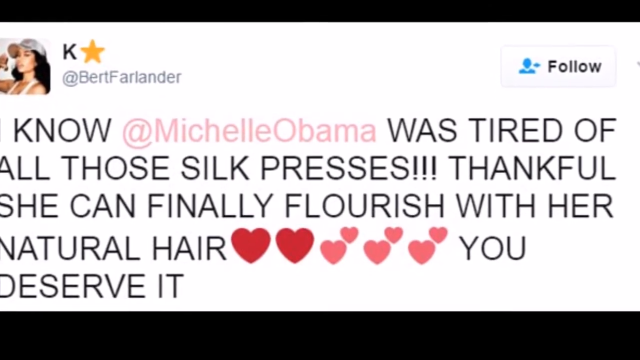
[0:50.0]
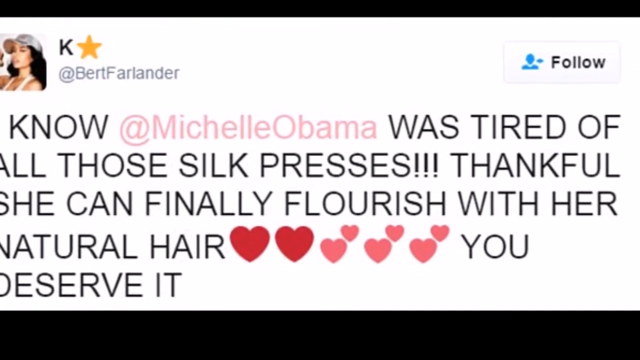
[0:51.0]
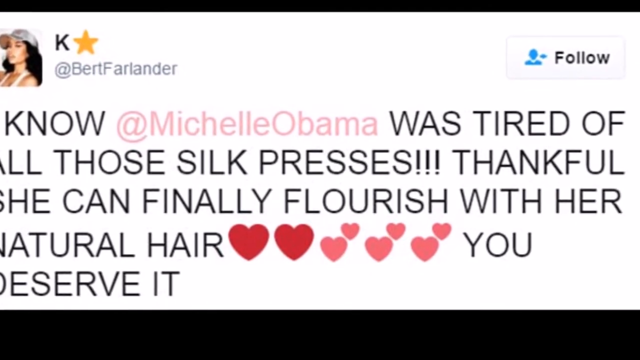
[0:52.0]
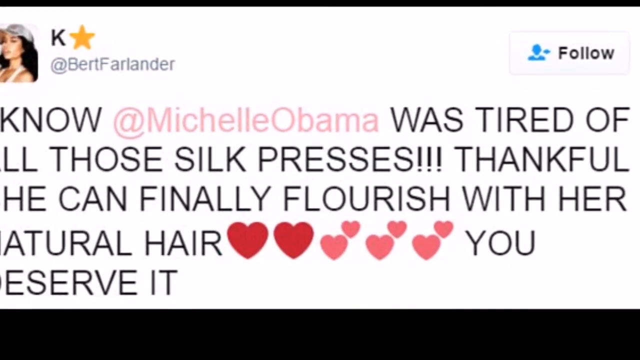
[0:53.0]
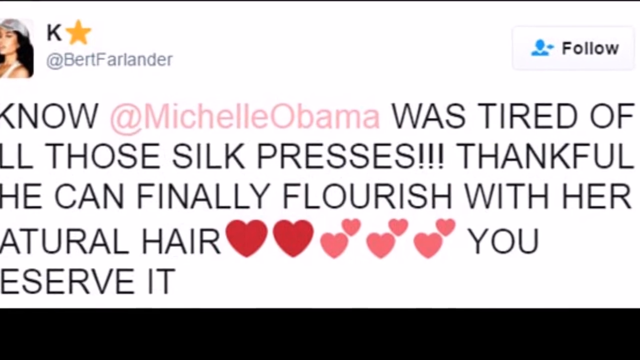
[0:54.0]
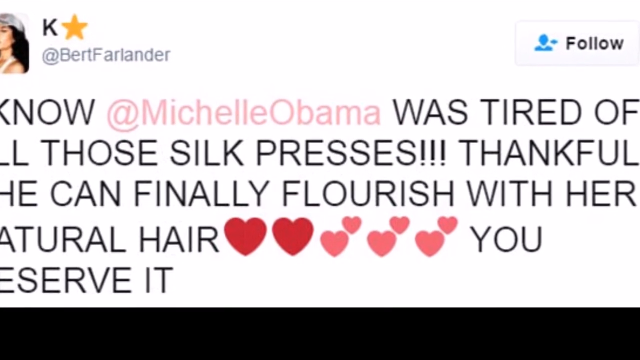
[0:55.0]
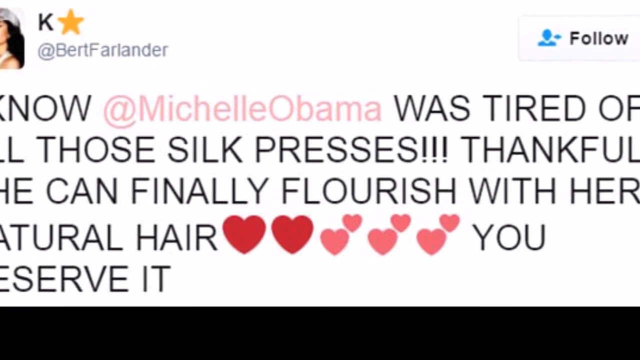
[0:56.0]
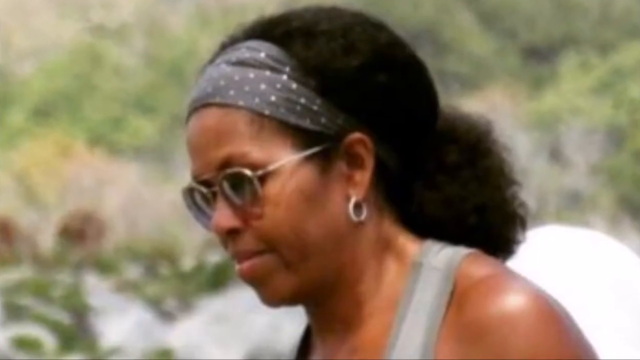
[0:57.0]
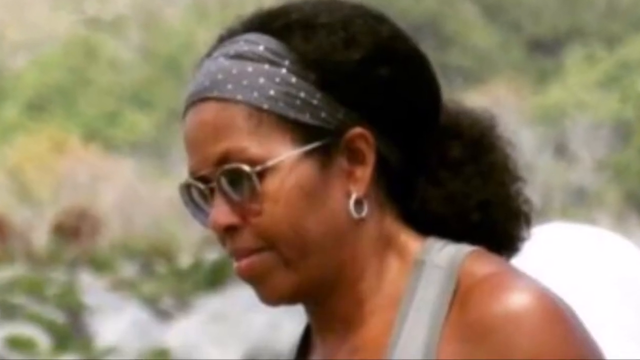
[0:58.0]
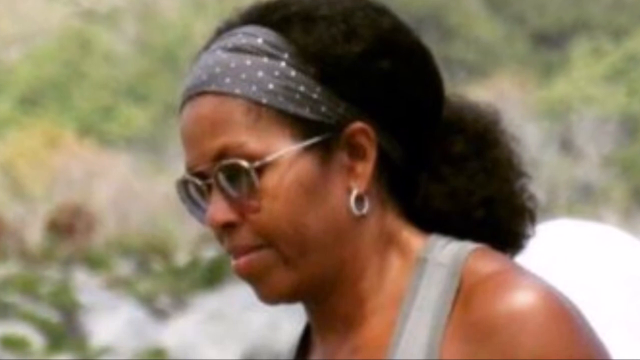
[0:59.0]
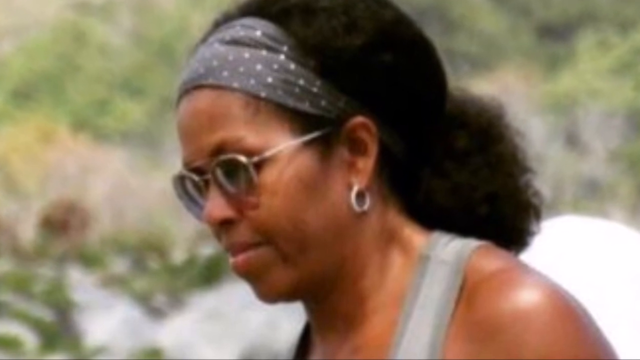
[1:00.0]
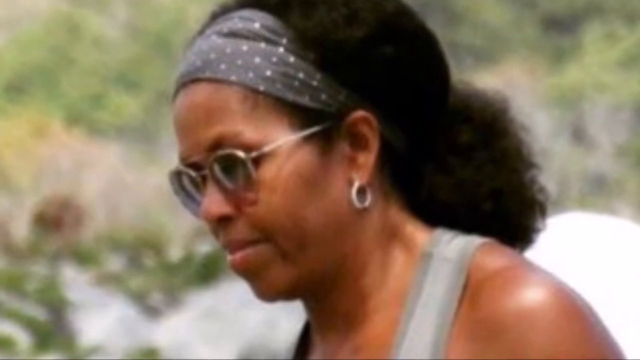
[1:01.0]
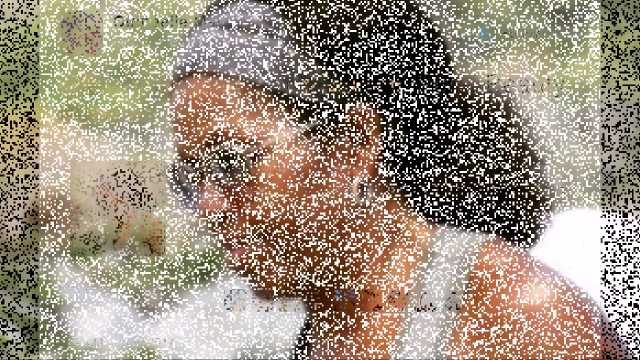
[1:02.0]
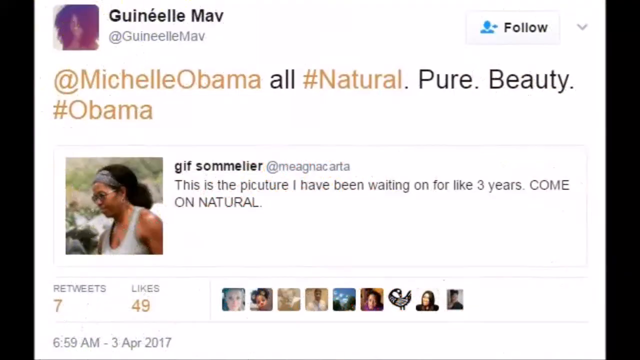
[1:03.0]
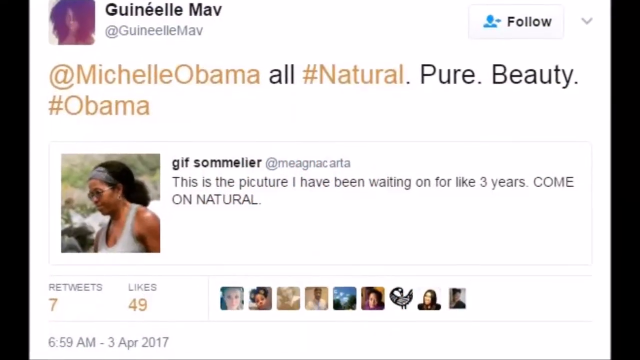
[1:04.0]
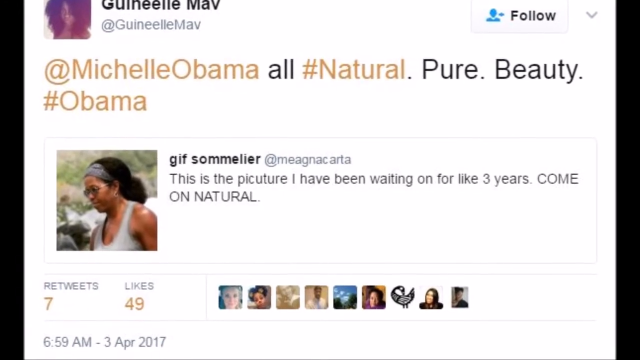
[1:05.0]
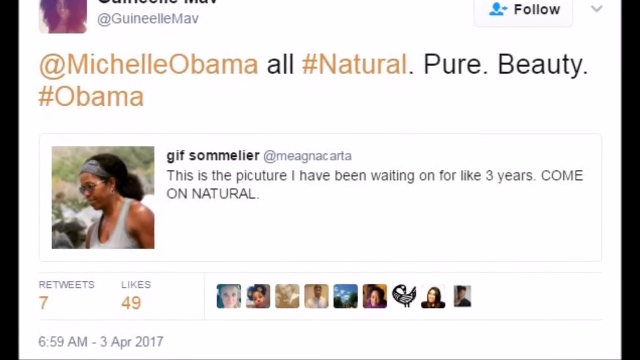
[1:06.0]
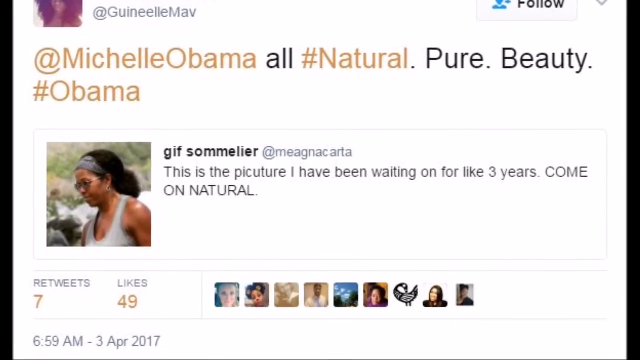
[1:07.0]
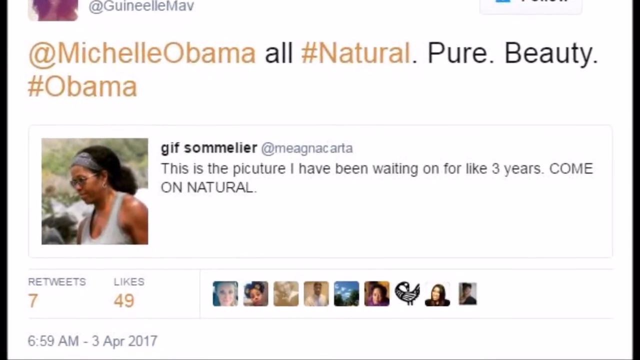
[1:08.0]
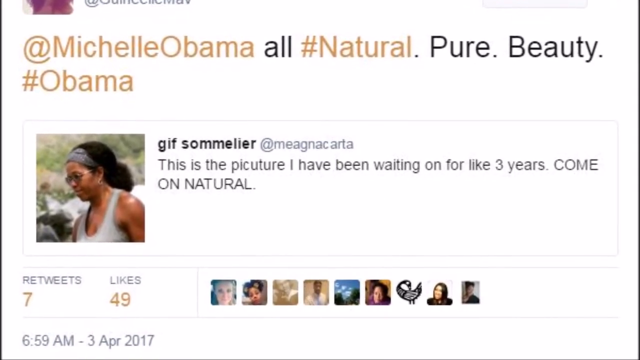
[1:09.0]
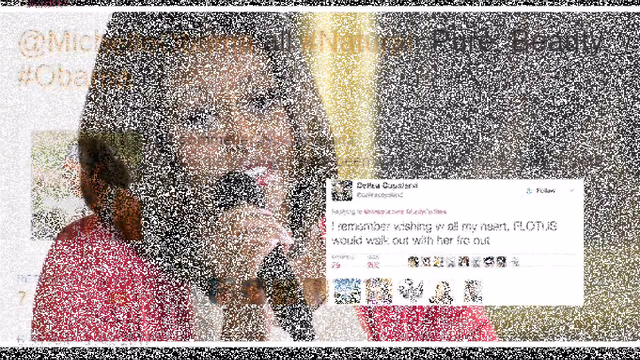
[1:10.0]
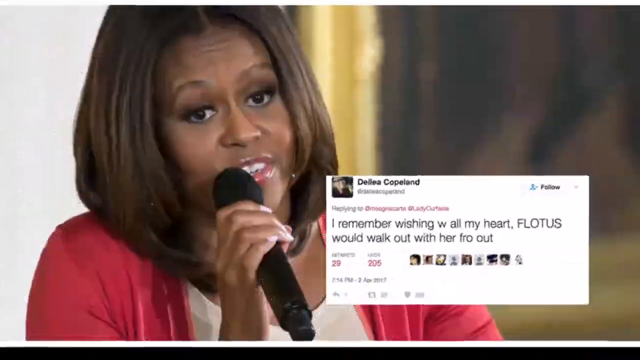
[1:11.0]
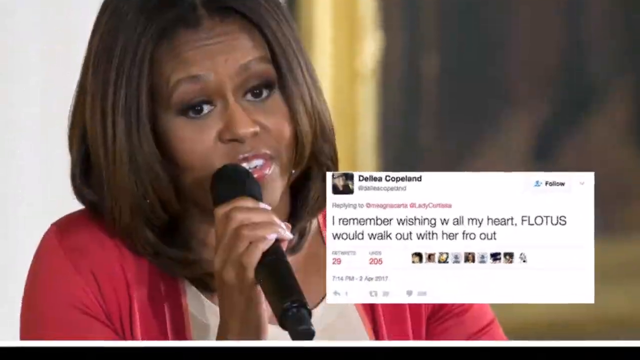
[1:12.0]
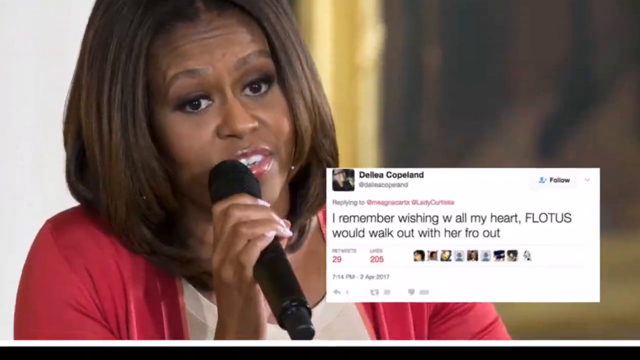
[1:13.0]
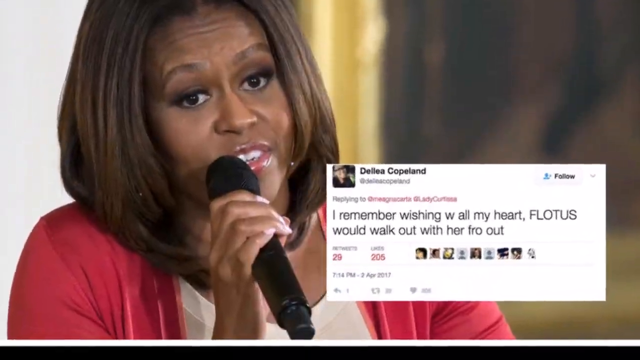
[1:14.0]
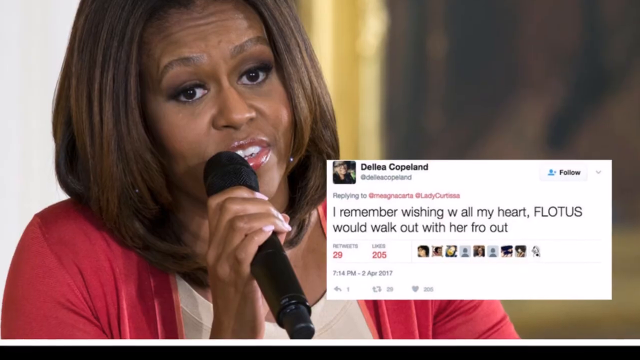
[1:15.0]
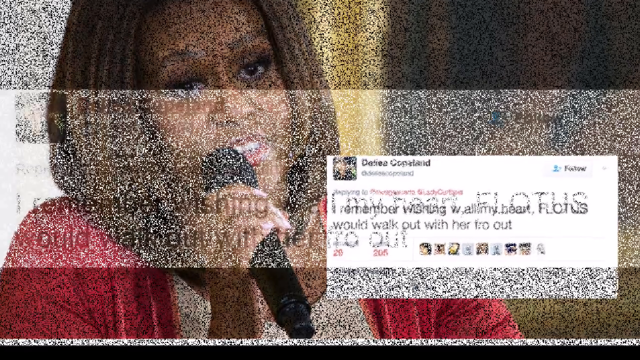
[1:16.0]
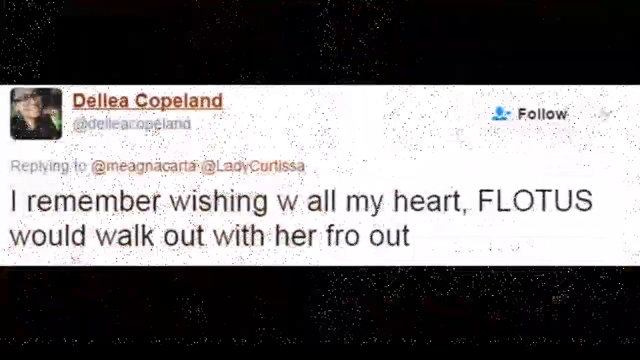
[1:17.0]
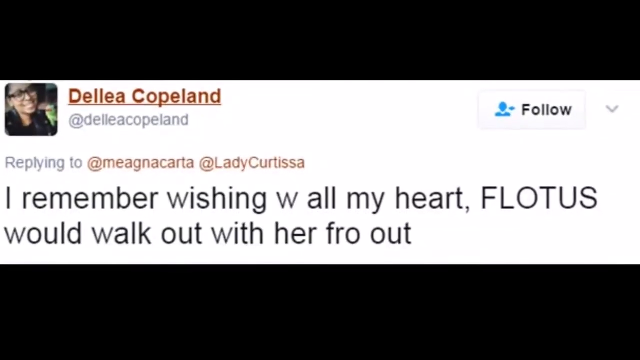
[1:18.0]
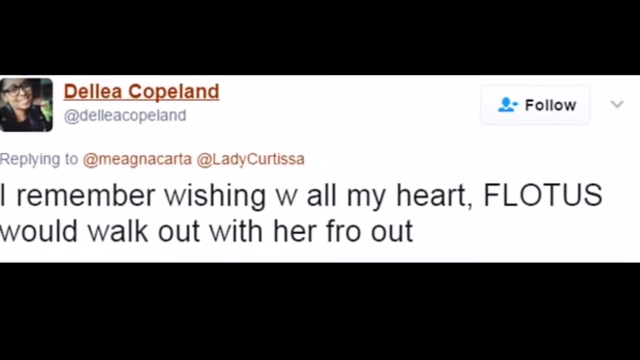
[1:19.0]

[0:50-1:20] A post by K, @BertFarlander, reads "I know that Michelle Obama was tired of all those silk presses. Thankful, she can finally flourish with her natural hair. You deserve it." A picture of the lady in glasses with black hair appears. Another post, by Ginele Mav, reads "@Michelle Obama all #natural. pure beauty #Obama". Then a picture of the woman is on the left side of the video, and on the right side is text reading "this is the picture I have been waiting on for like three years come on natural". At the lower part of the screen are several pictures too small to identify, and at the bottom left are numbers such as seven tweets and 49 likes. The video seems to zoom out, and another photo immediately appears of a lady holding a black microphone, in red clothing with a white top, with beautiful hair and white teeth. She seems to be saying something shown on screen as a post reading "i remember wishing you all my heart flutters would walk out". Lastly, another post is displayed clearly, reading "I remember the wishing you all my heart flutters would walk out".